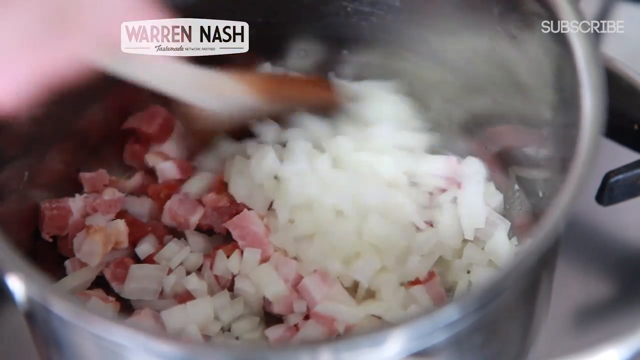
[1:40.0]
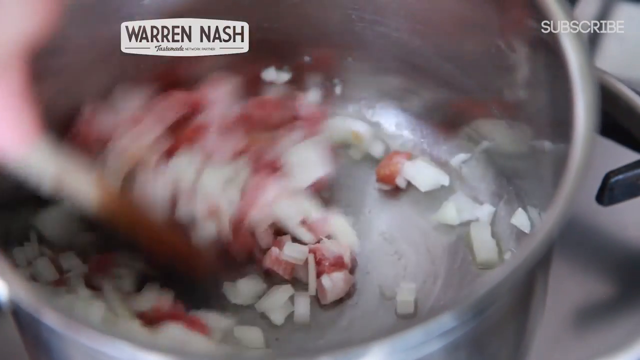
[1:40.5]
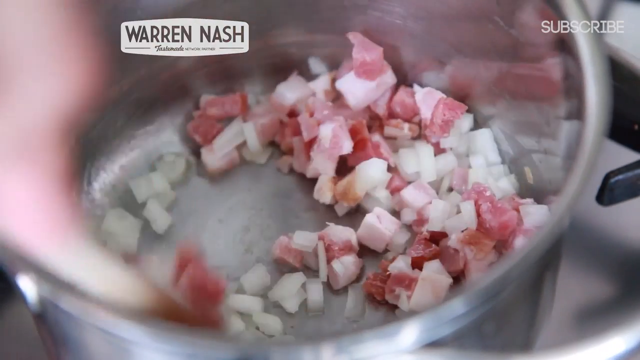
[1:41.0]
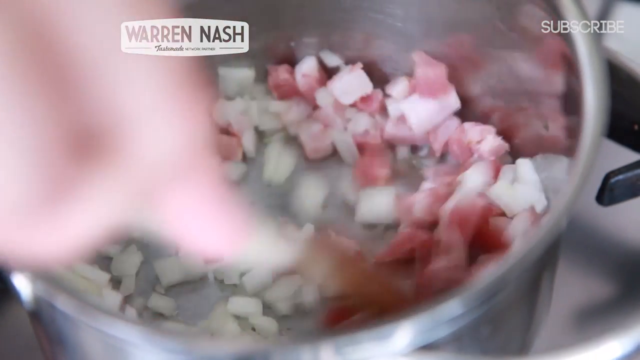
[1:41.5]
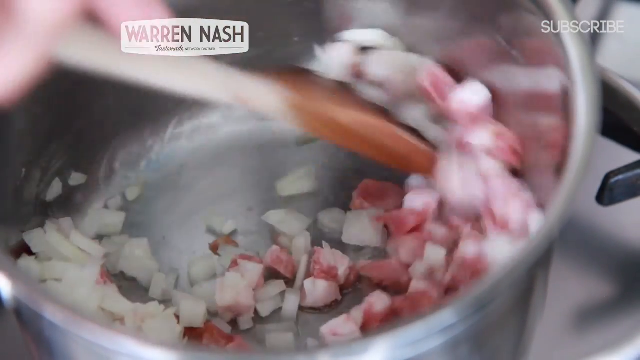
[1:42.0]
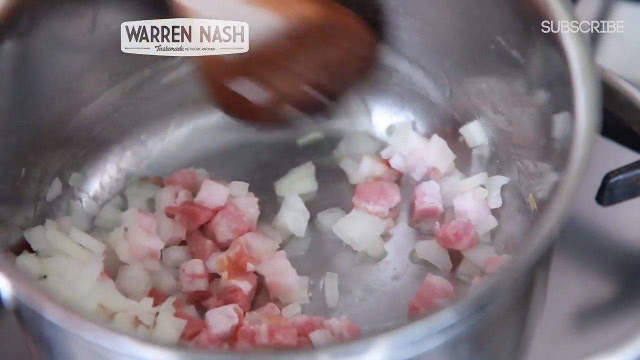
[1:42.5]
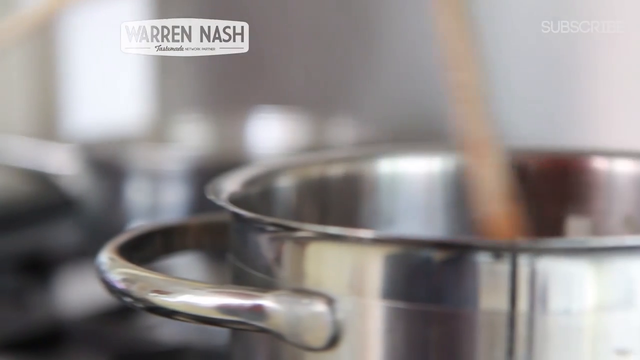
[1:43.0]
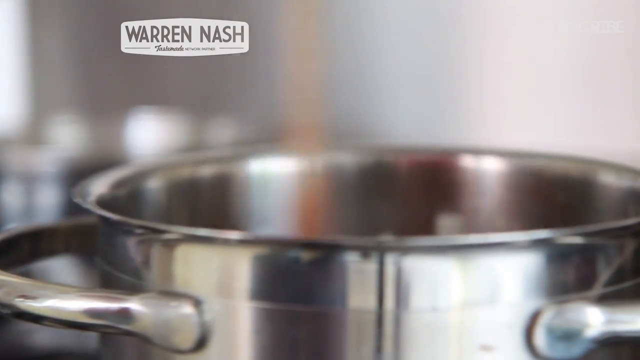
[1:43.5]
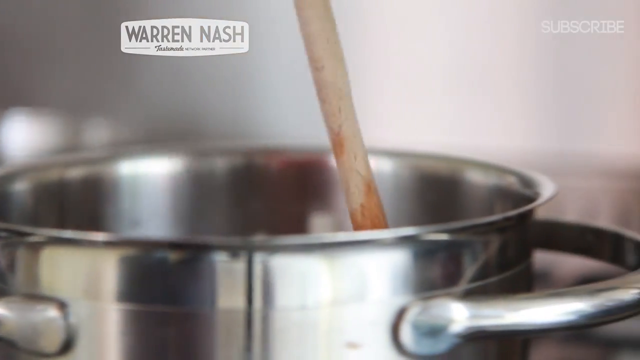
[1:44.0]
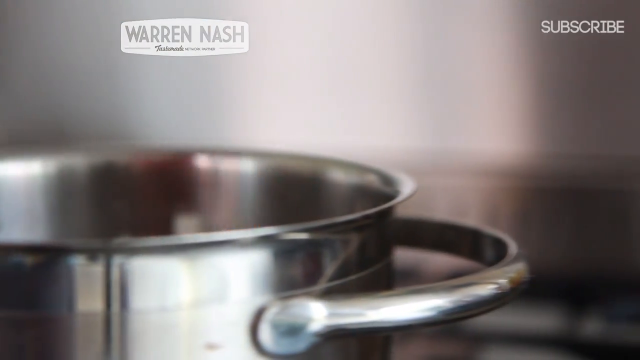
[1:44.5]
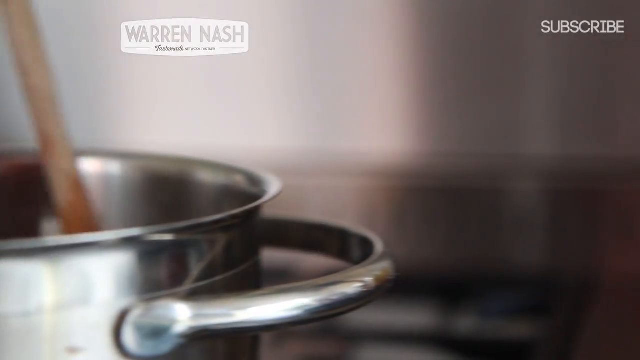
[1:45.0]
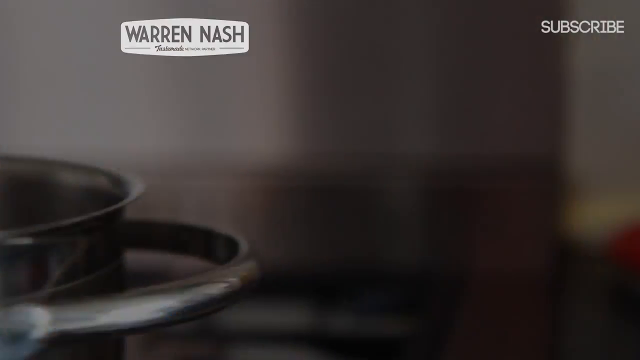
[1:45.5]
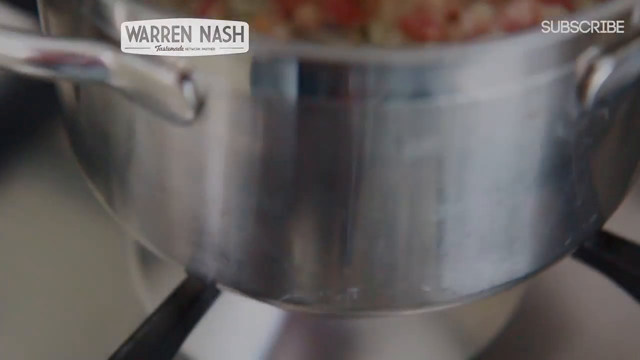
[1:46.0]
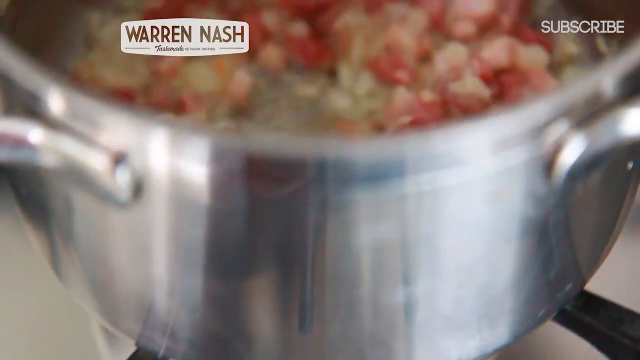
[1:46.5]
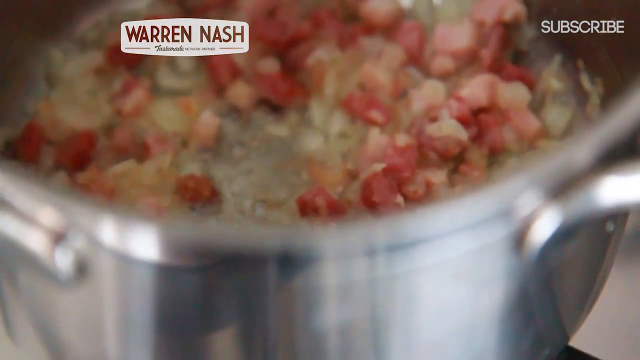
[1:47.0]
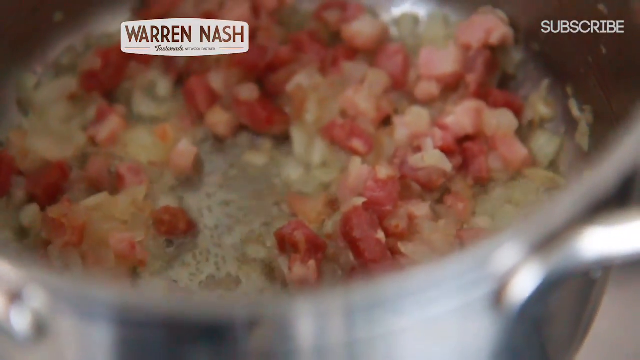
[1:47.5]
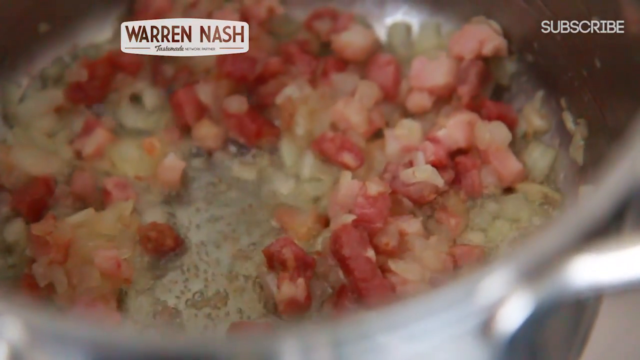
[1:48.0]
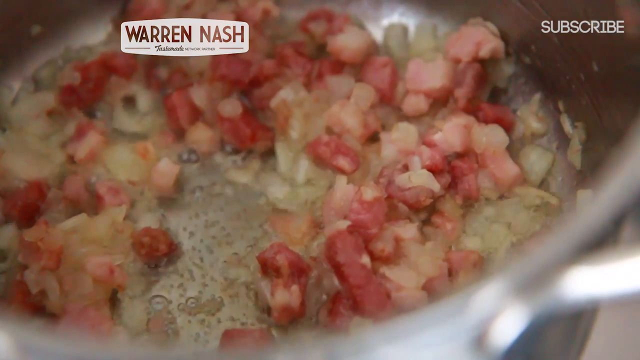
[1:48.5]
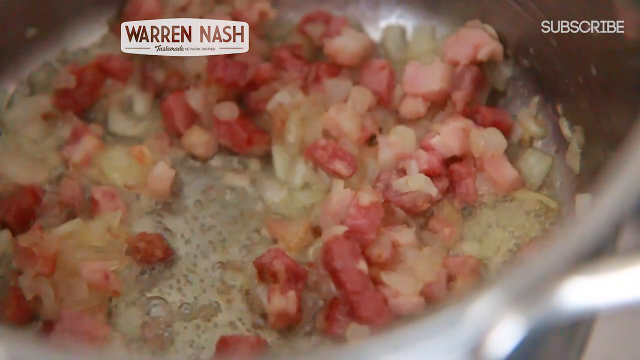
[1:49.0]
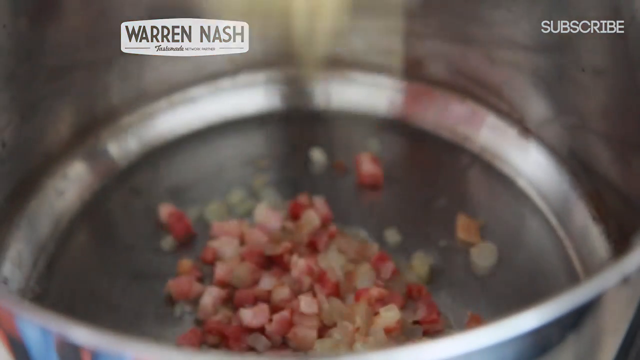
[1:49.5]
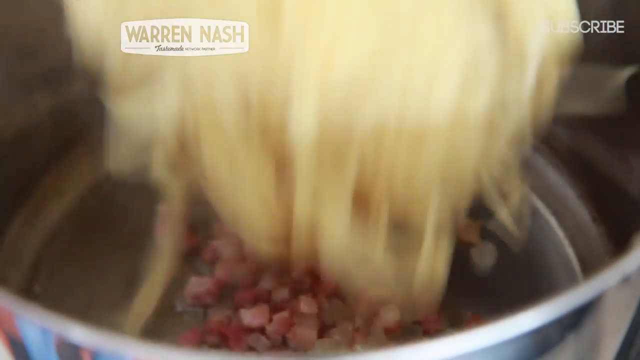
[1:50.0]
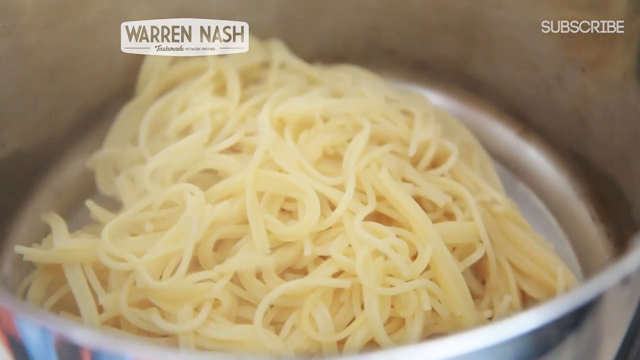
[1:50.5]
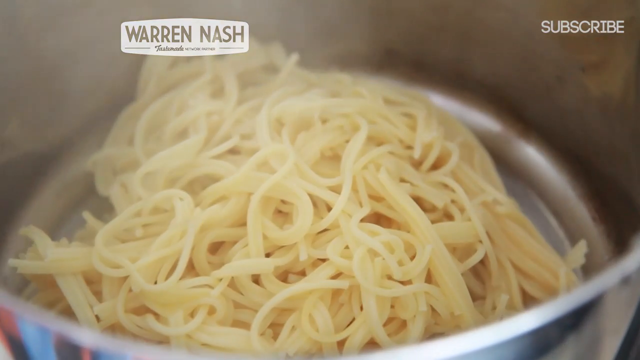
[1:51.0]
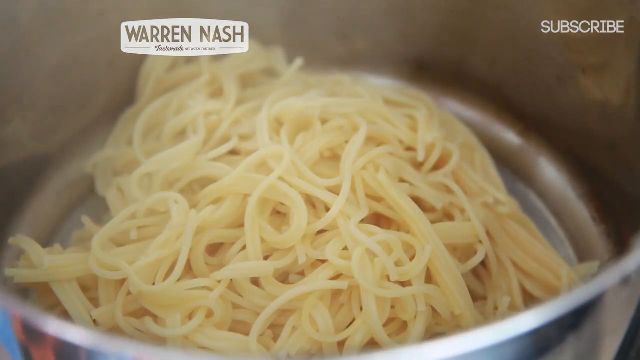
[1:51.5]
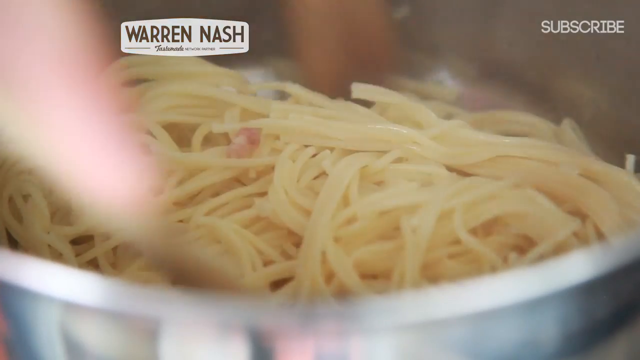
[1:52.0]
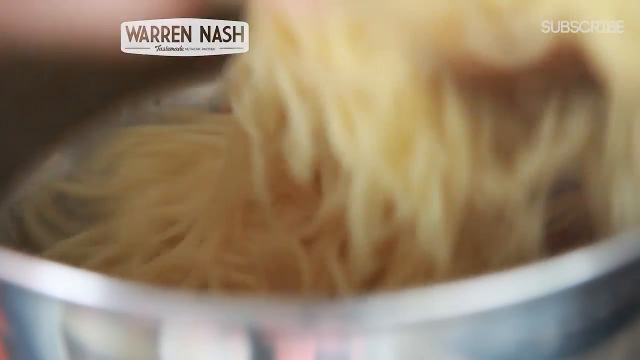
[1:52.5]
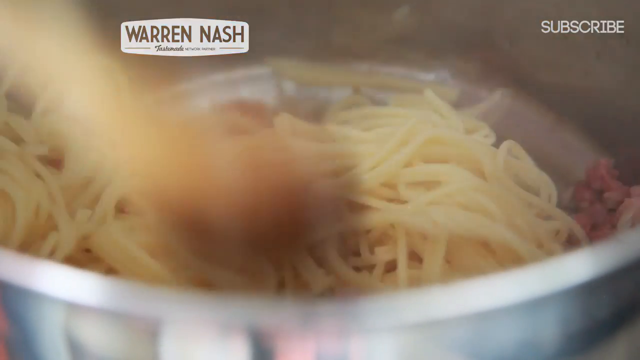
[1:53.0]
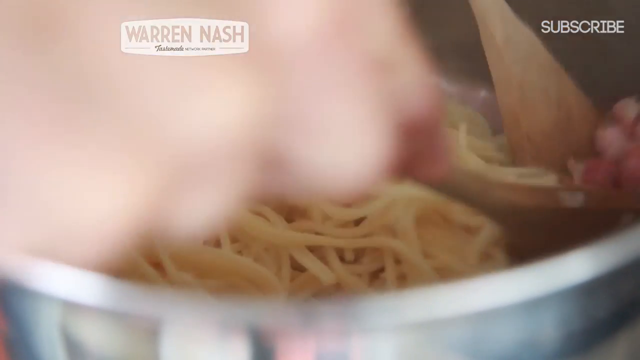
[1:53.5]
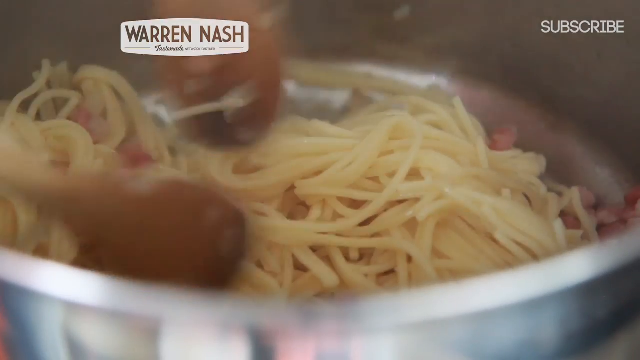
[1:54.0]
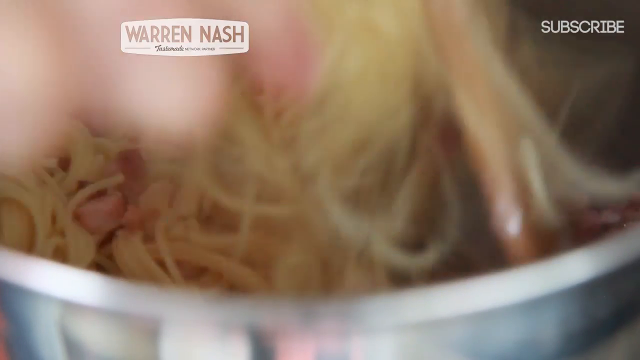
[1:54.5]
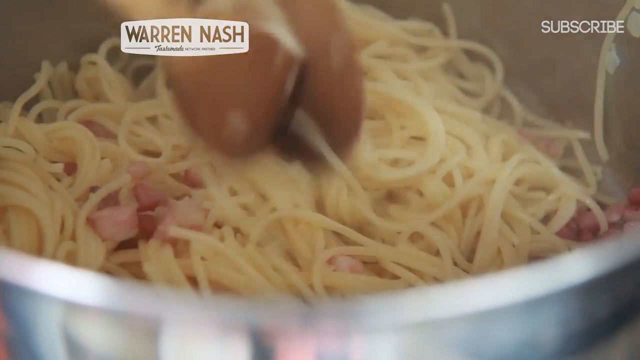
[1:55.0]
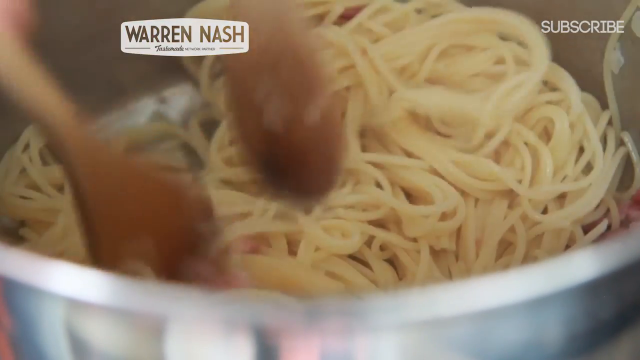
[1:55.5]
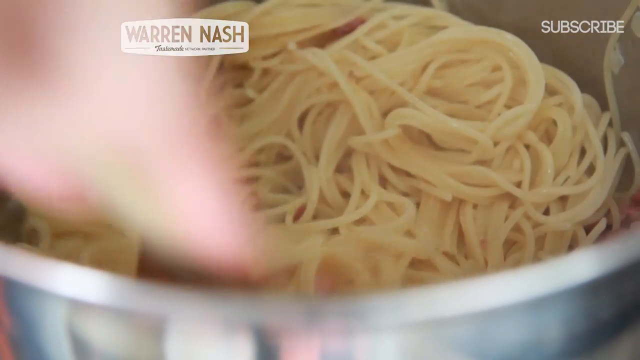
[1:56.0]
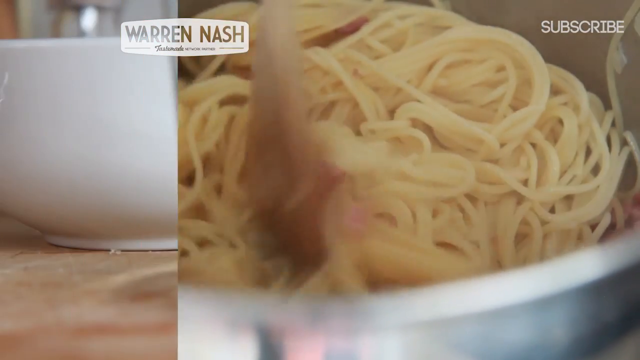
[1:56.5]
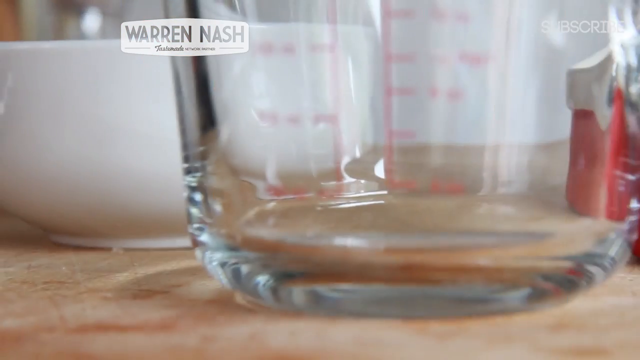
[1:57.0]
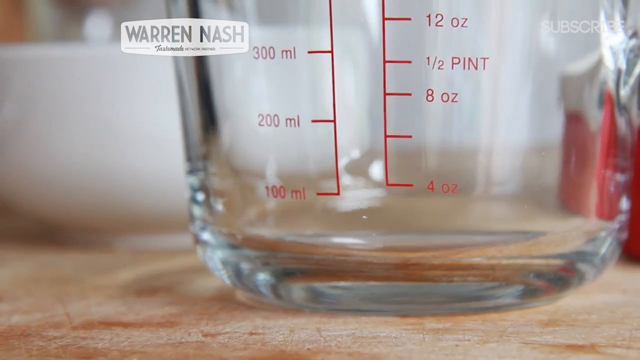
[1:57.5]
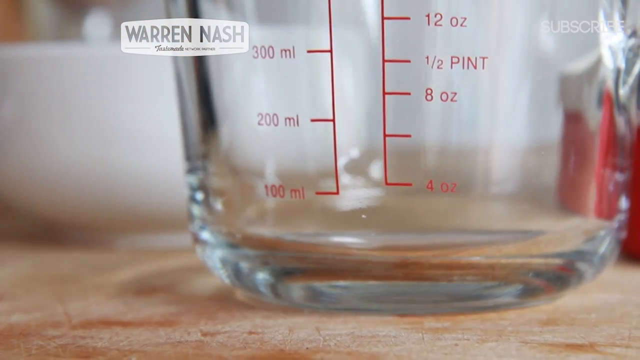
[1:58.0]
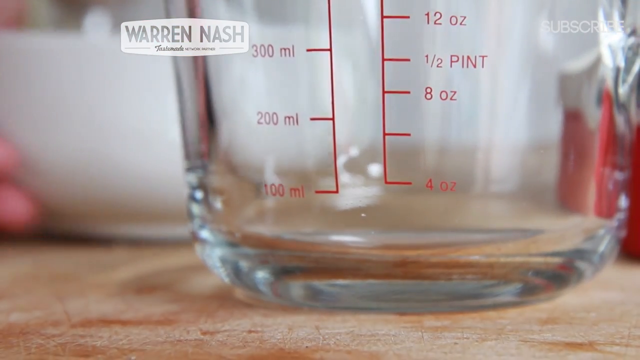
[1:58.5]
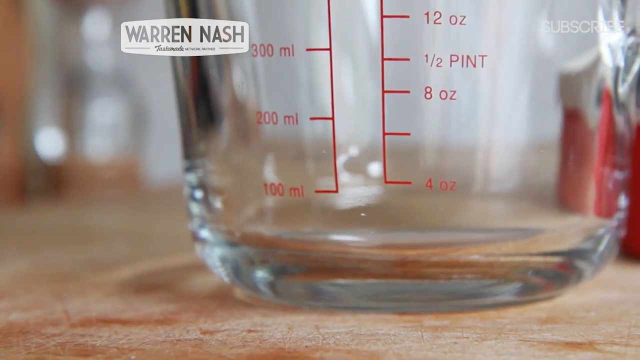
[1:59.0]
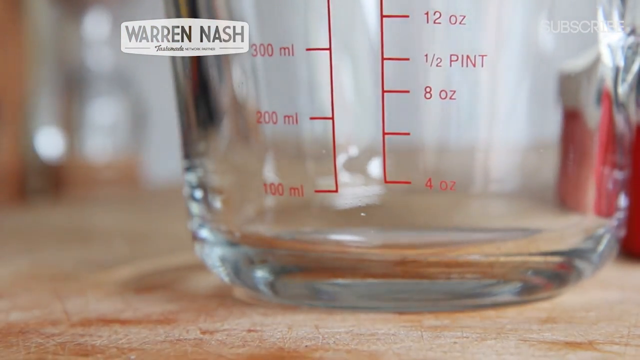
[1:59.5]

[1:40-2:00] Warren stirs the bacon, butter and onion with a wooden spoon, frying them until they are golden brown. While they fry, he takes his spaghetti and adds it to the pot. He then mixes the bacon, spaghetti, onion and butter together using two wooden spoons, stirring as they blend. Next he is about to take some other ingredients and mix them in what looks like a measuring jar, apparently to make what looks like cream to add to the spaghetti.